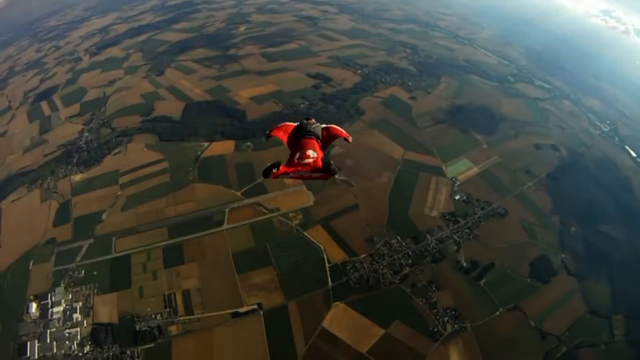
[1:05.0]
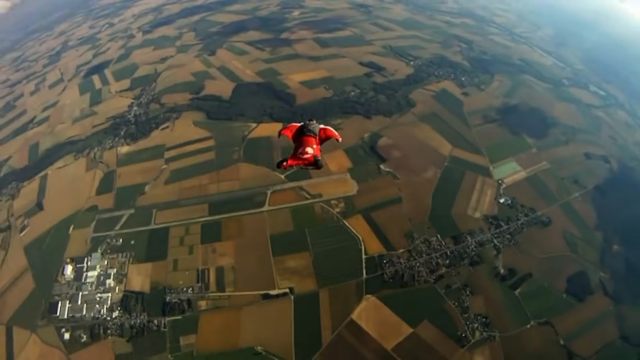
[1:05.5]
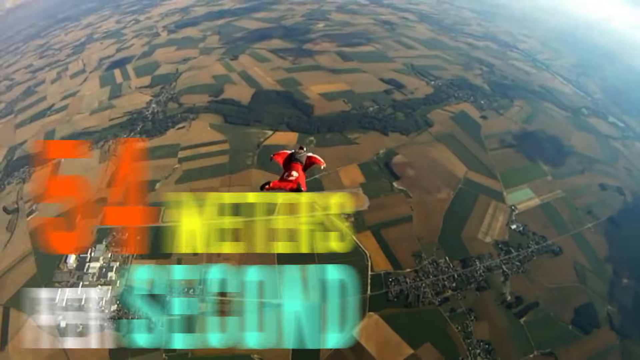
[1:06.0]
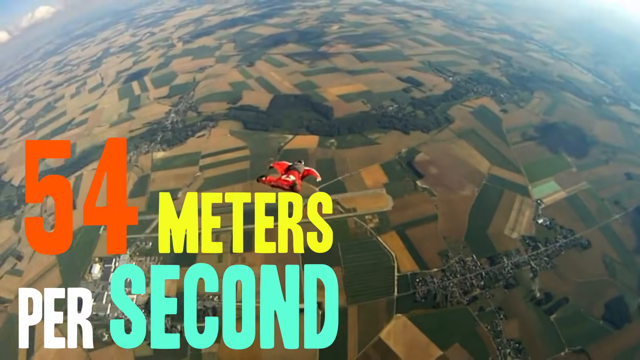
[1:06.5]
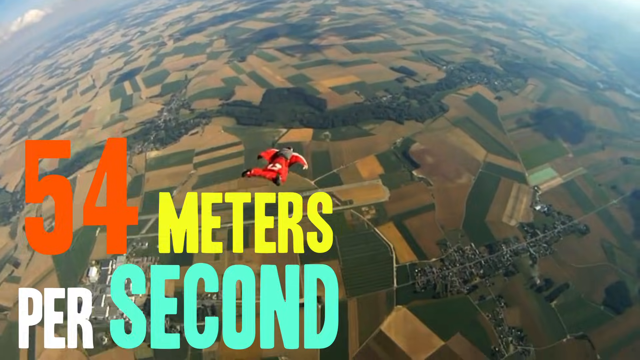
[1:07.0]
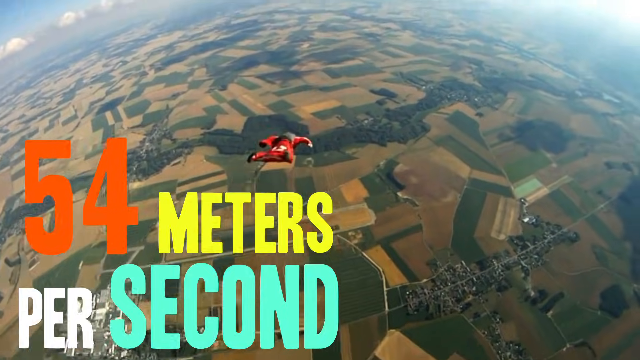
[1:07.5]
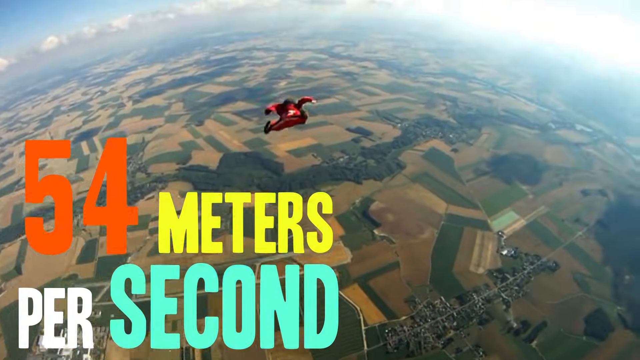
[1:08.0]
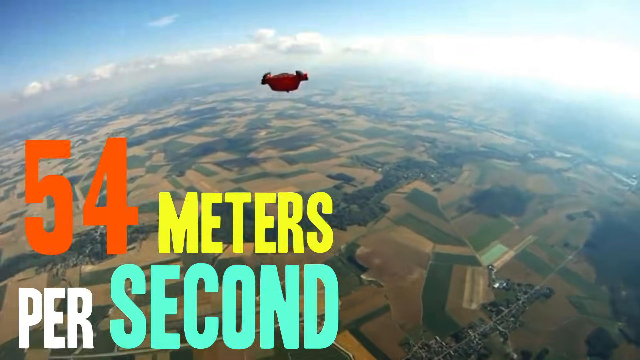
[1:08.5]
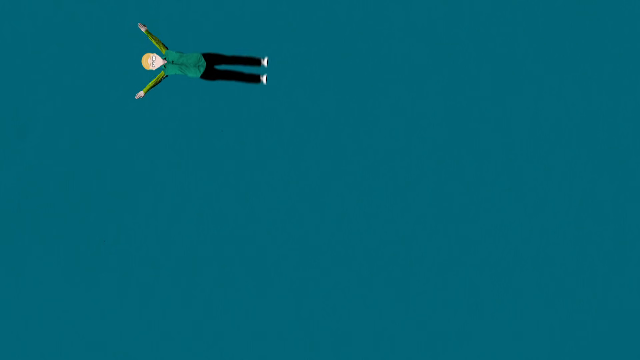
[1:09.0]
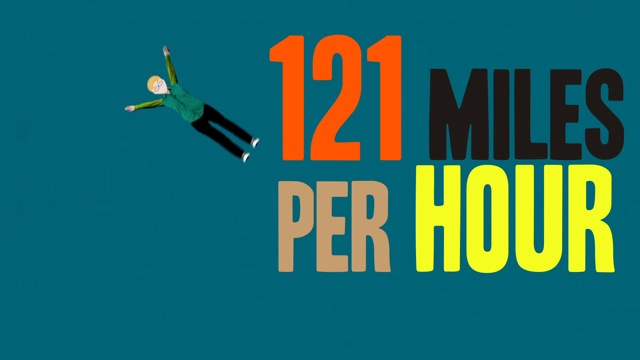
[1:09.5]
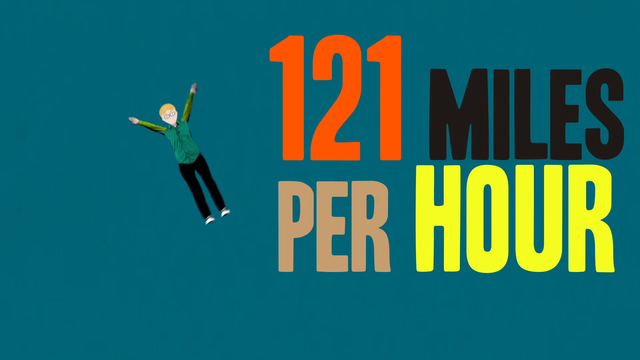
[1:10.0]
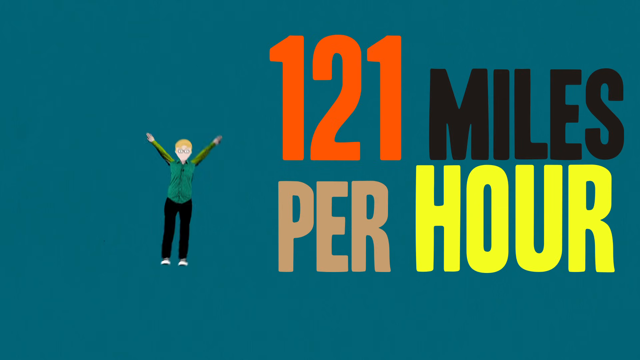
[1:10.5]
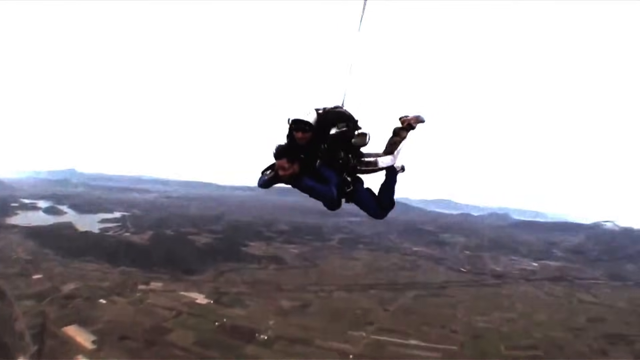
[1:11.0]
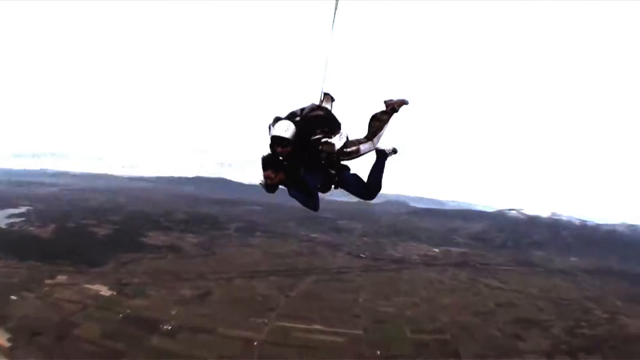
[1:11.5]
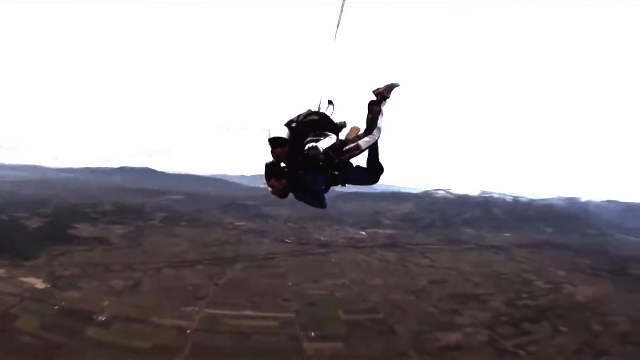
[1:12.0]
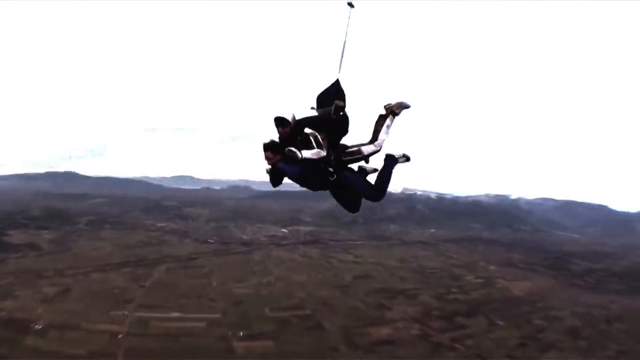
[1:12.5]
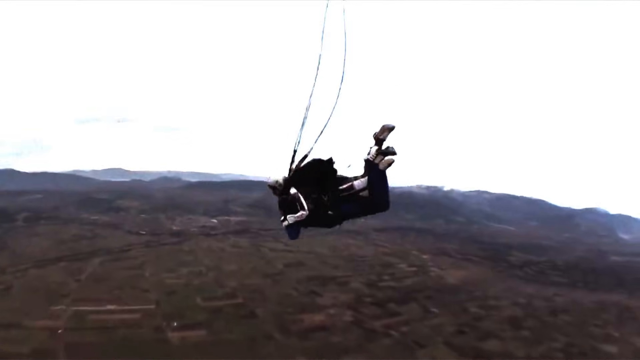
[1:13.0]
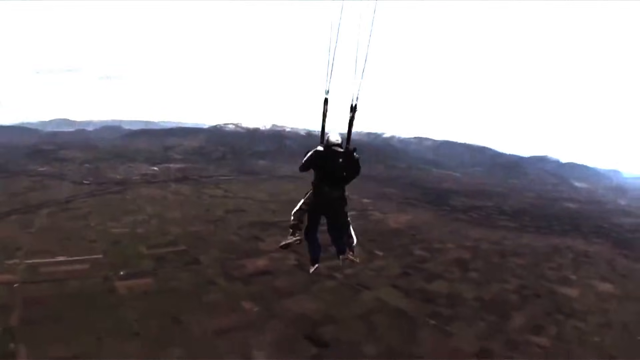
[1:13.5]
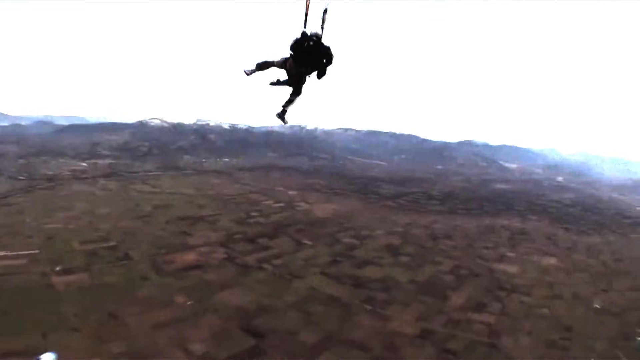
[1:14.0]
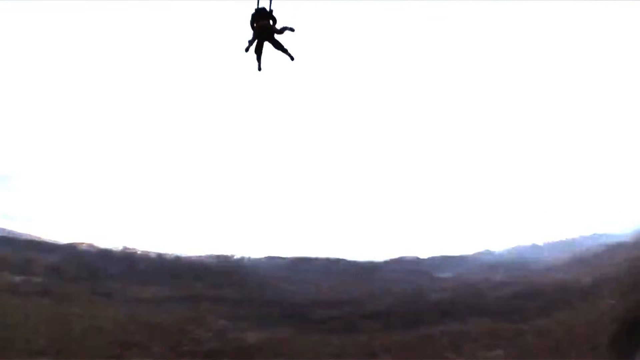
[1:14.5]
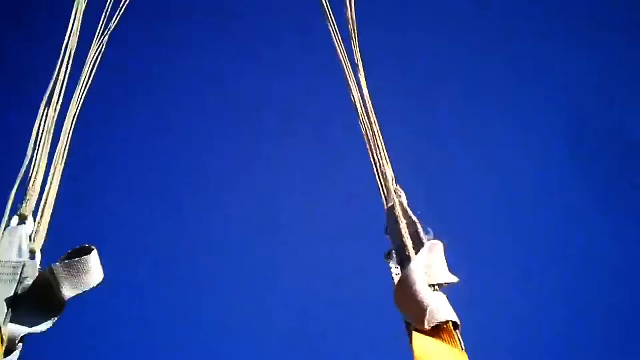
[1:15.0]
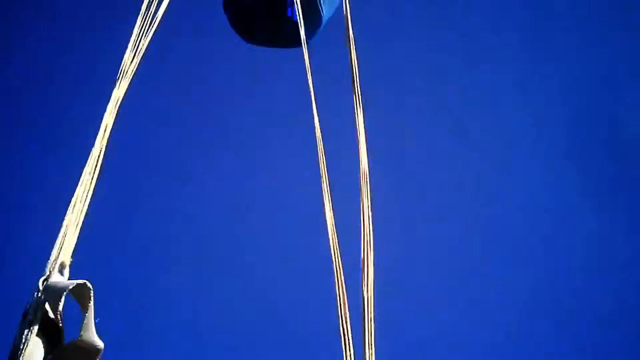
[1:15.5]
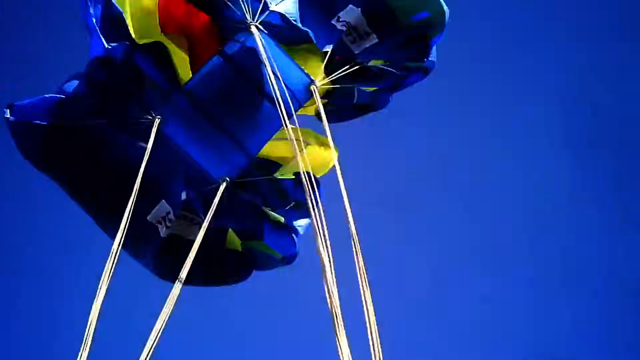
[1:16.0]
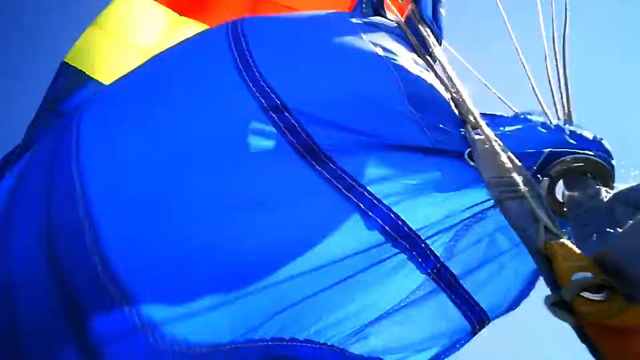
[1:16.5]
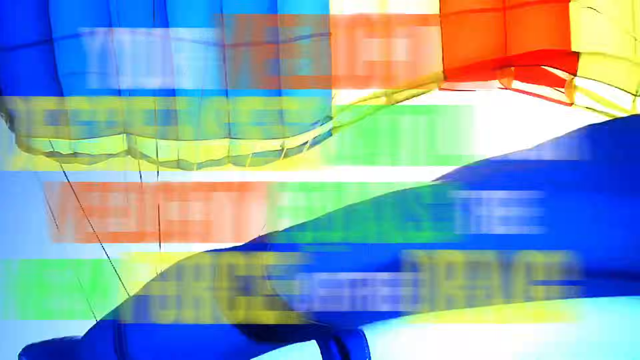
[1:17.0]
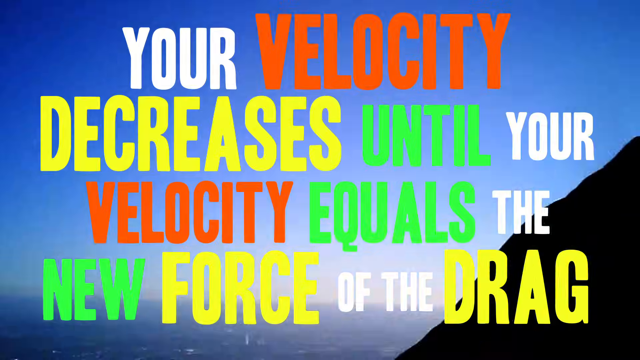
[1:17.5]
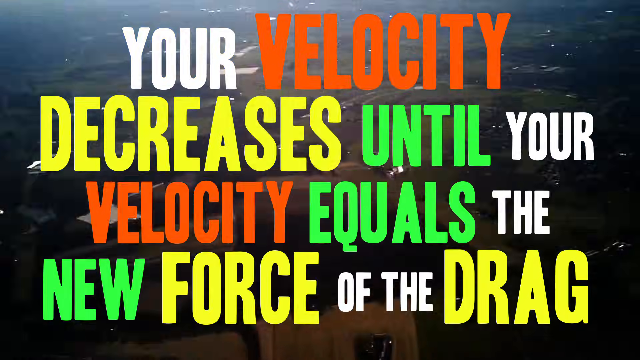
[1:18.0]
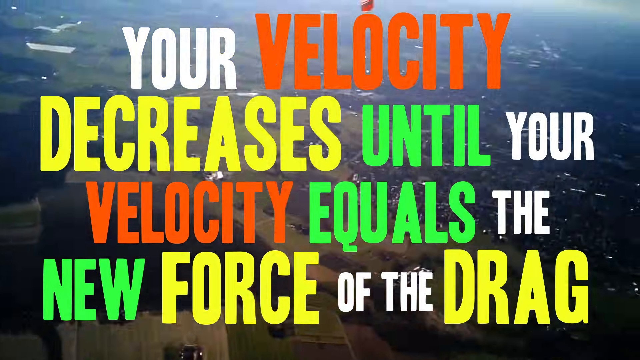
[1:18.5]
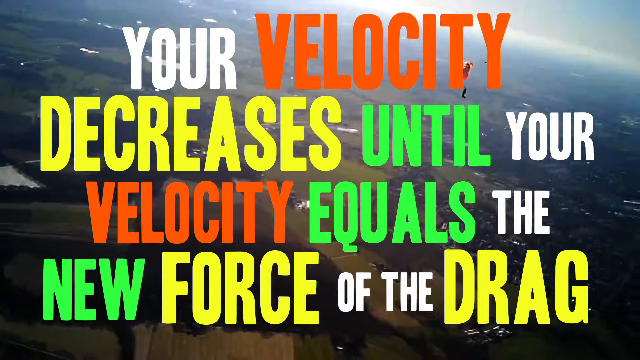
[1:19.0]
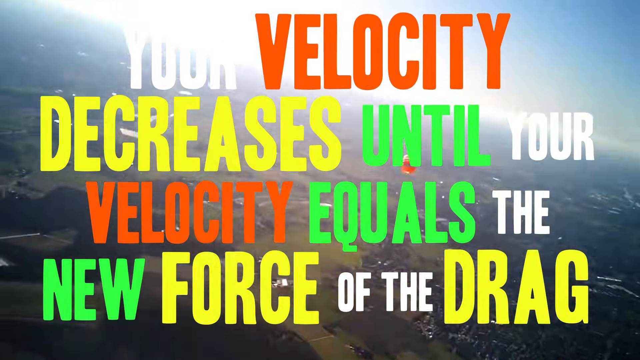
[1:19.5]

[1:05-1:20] A green logo reading "SciShow" is in the bottom right-hand corner as screens of text are combined with imagery of skydivers. A skydiver in a red wingsuit-style suit with extended flaps on the sides points toward the ground as text reads "54 meters per second." It cuts to a teal background with text over it reading "121 miles per hour," along with a small cartoon of a character falling. The footage then returns to skydivers, this time a tandem skydiving group that has pulled their parachute, which opens in bright blue, and text reads "your velocity decreases until your velocity equals the new force of the drag."